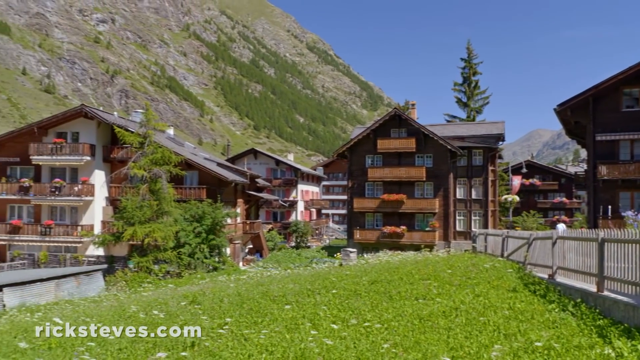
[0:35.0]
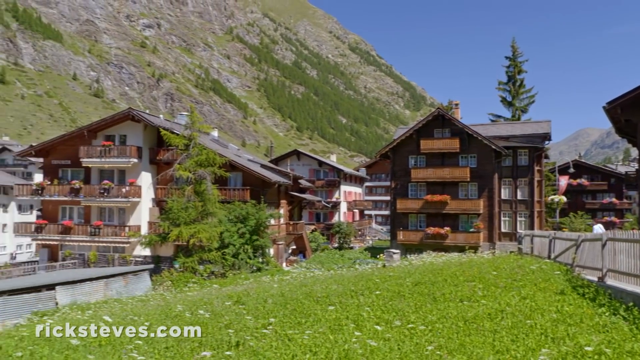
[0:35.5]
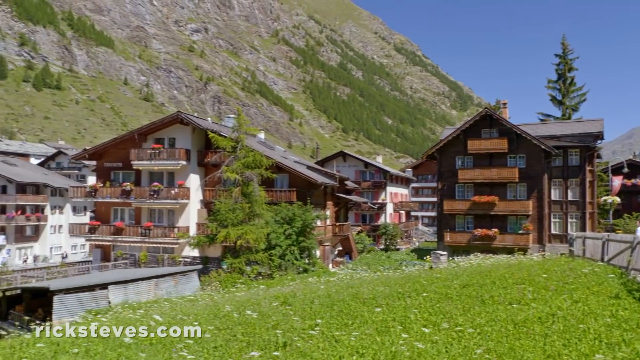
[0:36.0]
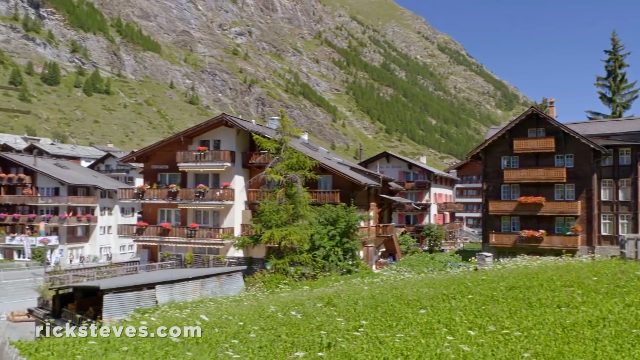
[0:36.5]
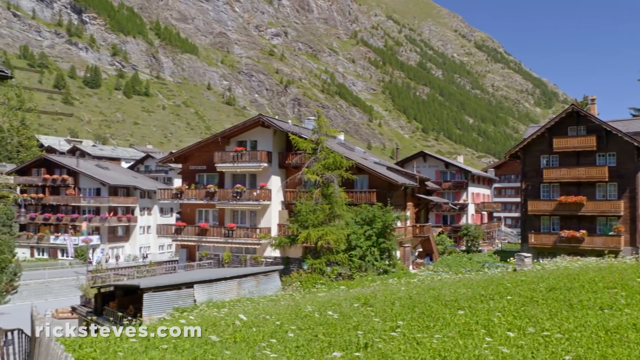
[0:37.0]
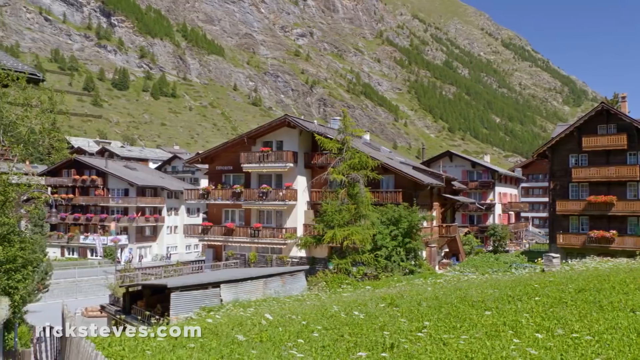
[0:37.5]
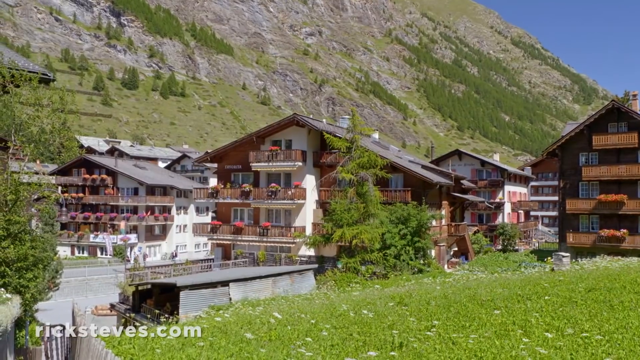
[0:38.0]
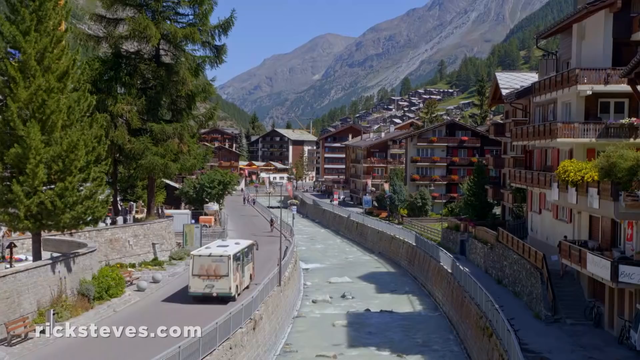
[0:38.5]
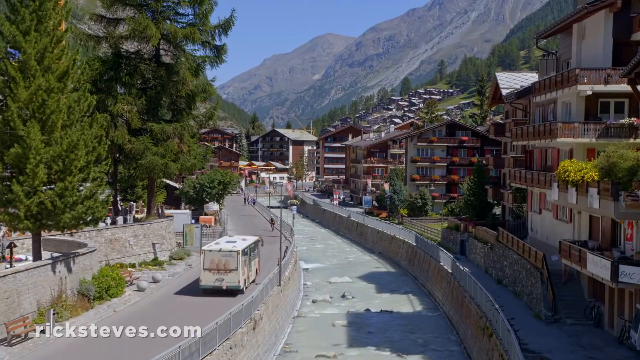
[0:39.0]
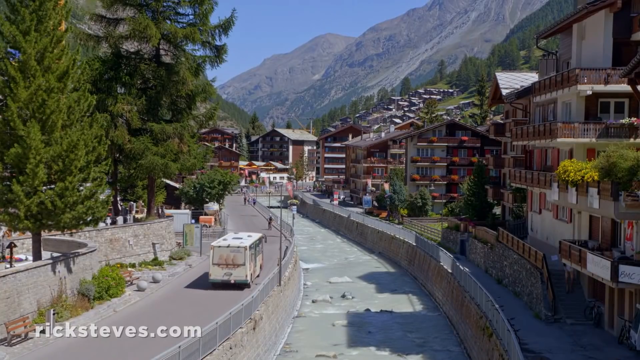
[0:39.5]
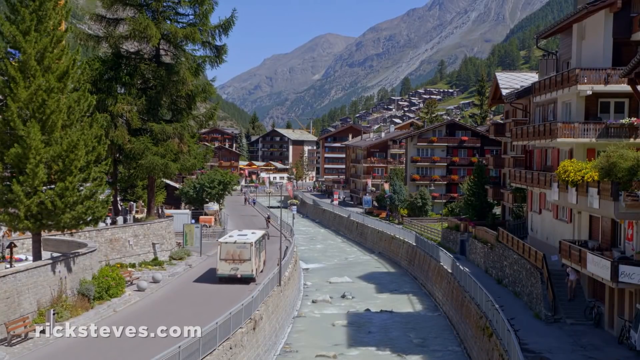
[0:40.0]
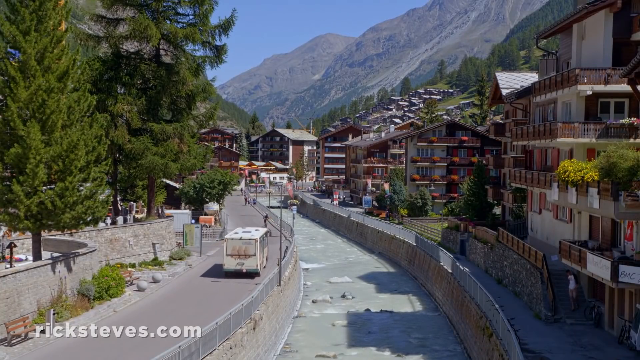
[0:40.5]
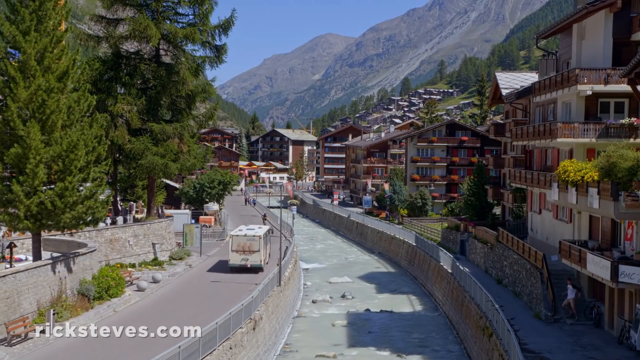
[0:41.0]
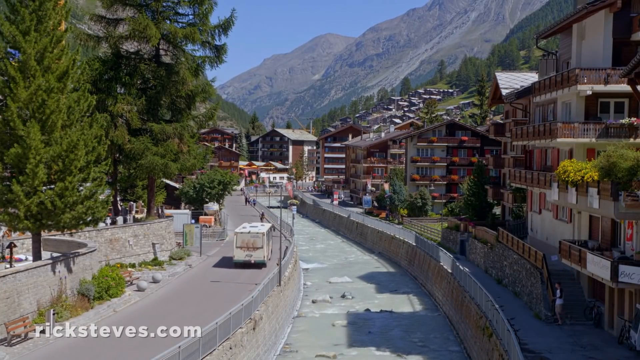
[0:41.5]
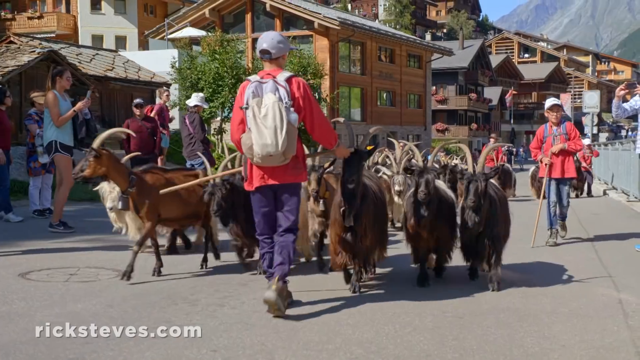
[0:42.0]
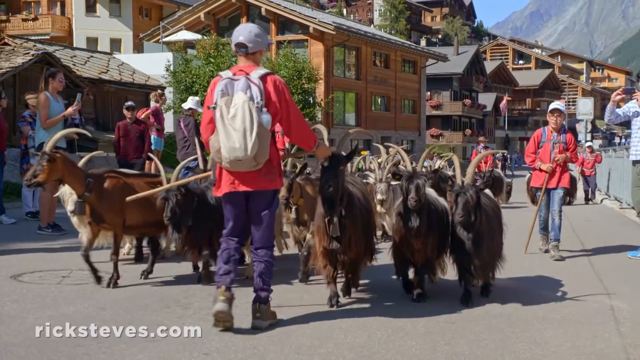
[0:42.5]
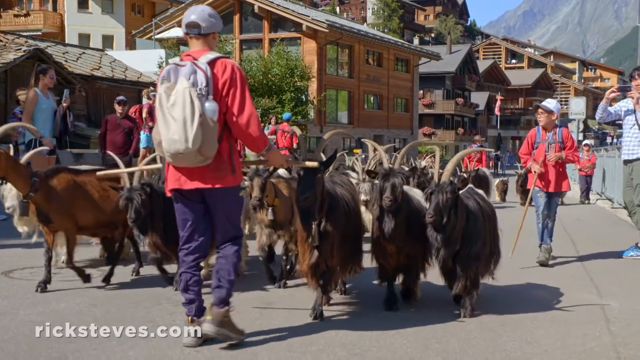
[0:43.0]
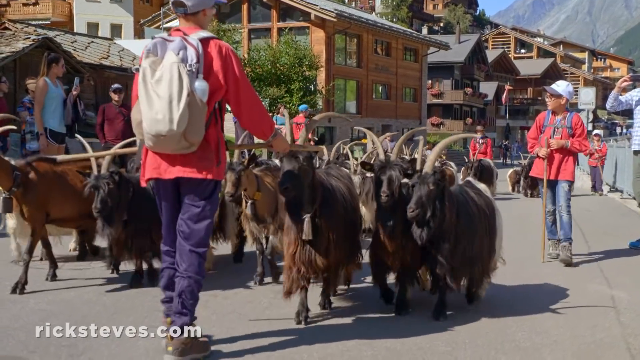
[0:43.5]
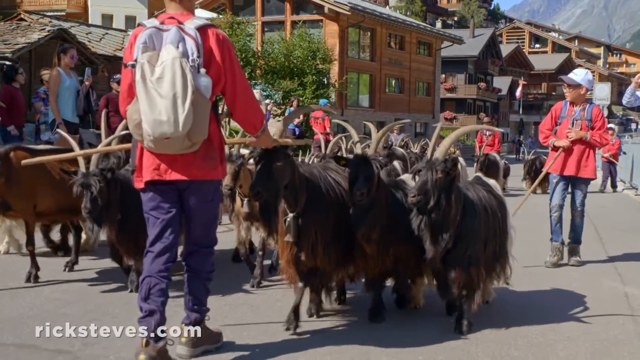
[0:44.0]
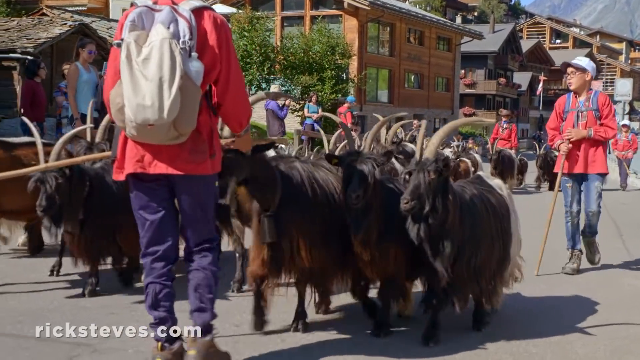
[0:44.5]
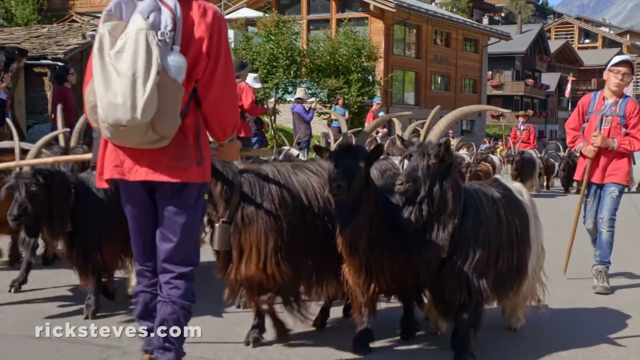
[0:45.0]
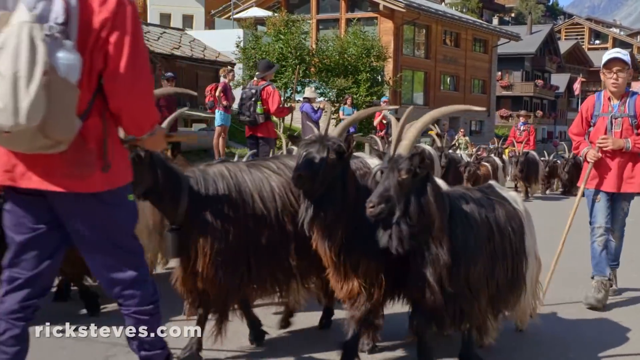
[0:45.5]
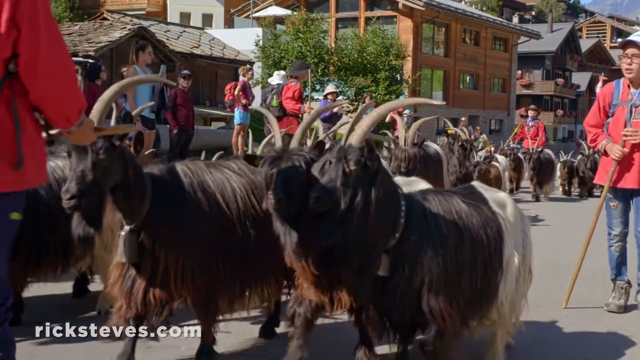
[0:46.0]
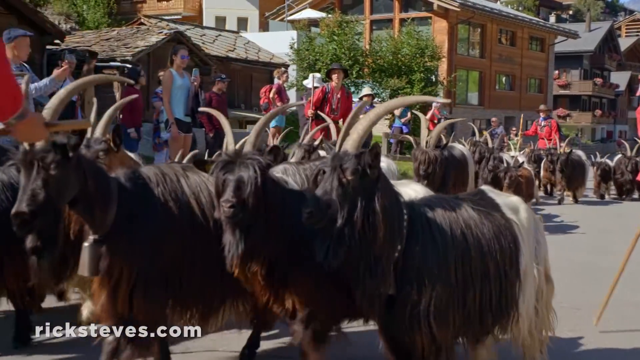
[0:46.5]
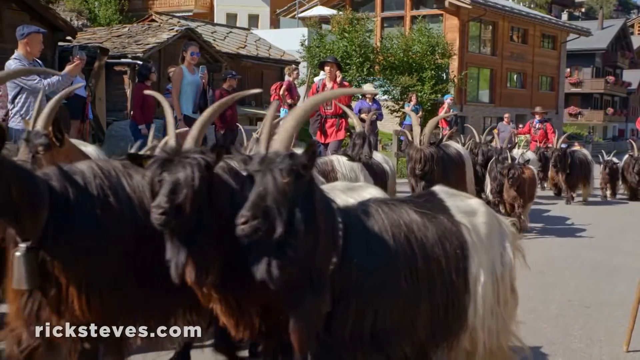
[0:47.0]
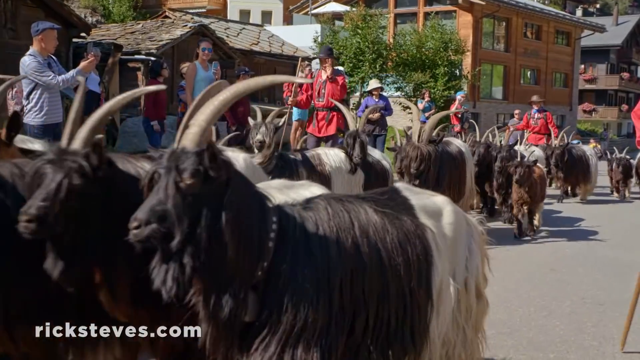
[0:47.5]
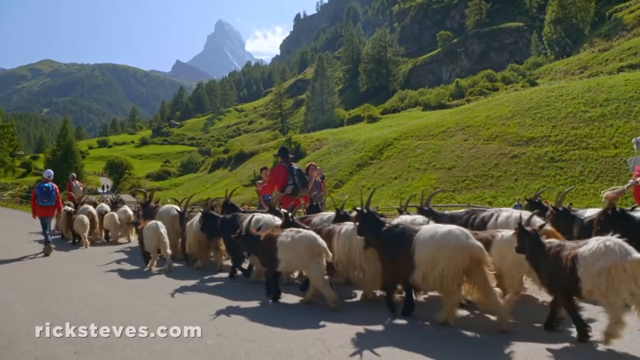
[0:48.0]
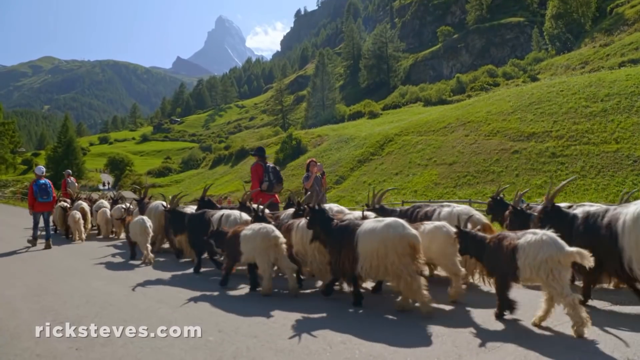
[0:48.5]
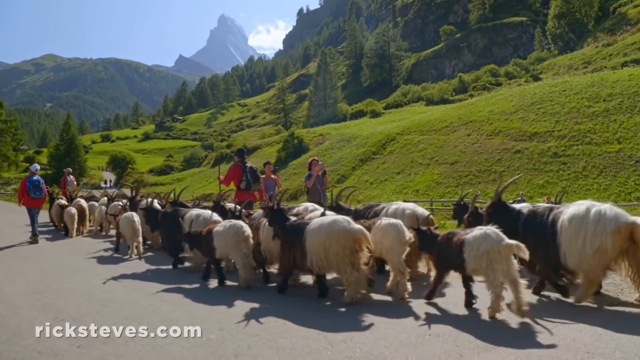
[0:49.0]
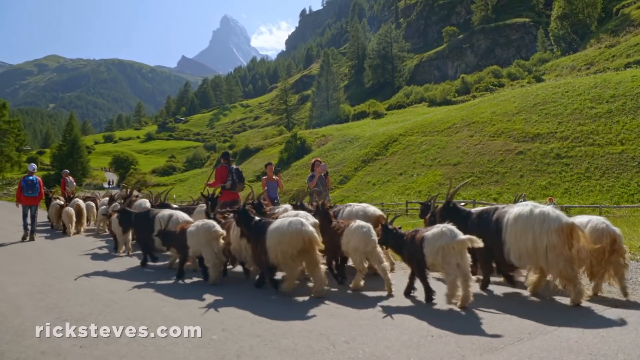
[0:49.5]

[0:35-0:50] The video is about Zermatt, Switzerland, finding charm in the Swiss Alps. Houses are shown, then a roadway with a bus coming into the city. Then goat herders appear, maybe four or five of them, leading a herd of apparently 20 or 25 goats down the road. The herders all wear red shirts and backpacks and carry walking sticks to help steer the goats. Tourists step to the side to let the goats through and watch them, some taking pictures or videos. The goats have tall, somewhat sharp-looking long horns and appear to have very long fur, and some have bells around their necks. The herders lead them toward a different pasture out of the city.